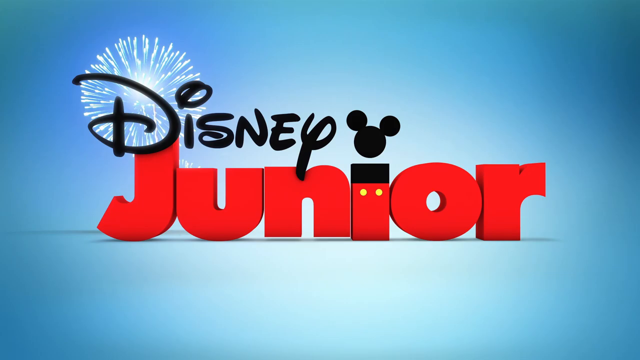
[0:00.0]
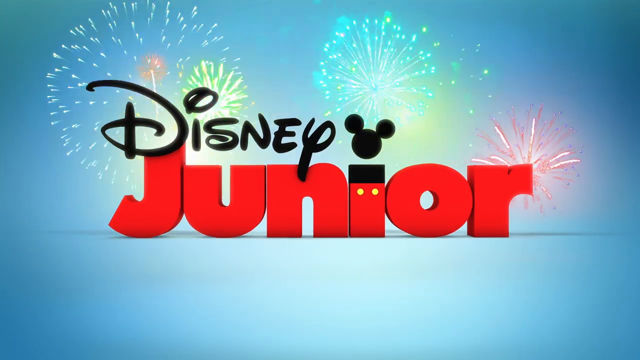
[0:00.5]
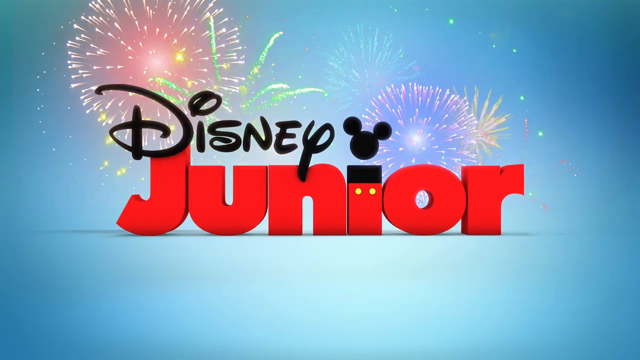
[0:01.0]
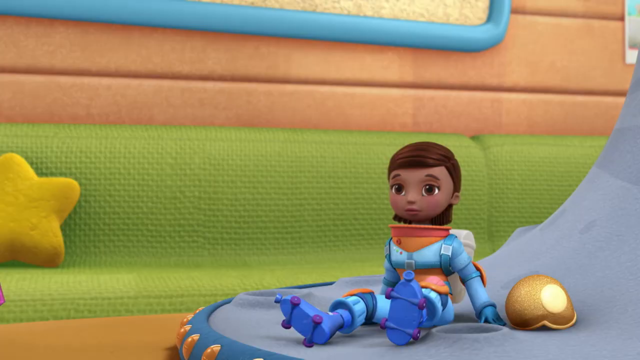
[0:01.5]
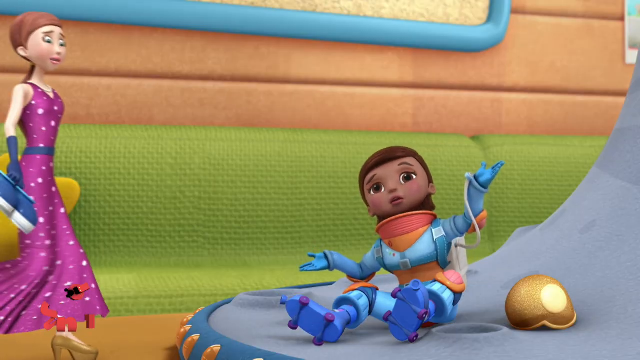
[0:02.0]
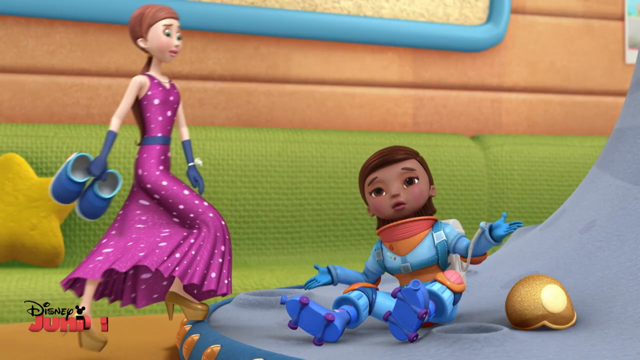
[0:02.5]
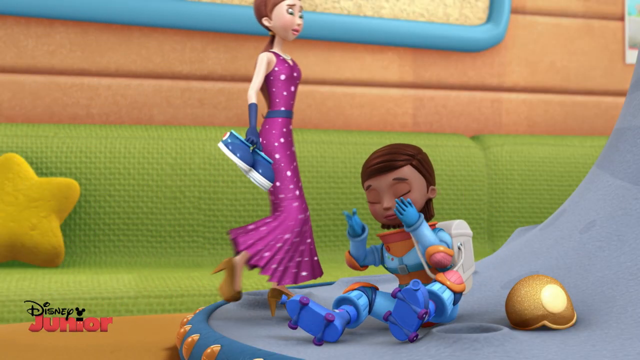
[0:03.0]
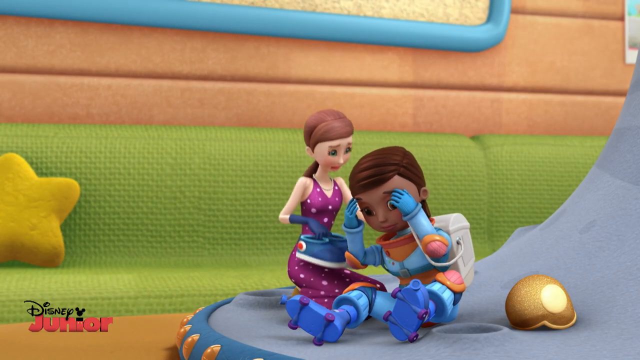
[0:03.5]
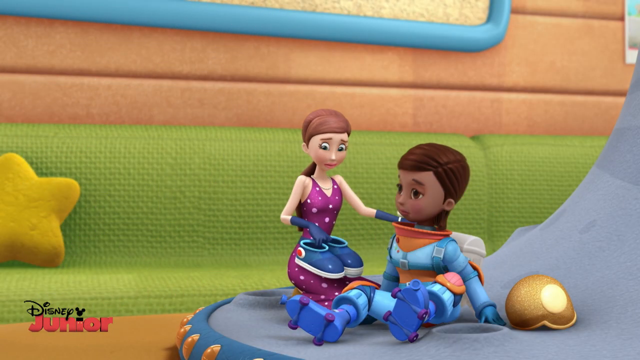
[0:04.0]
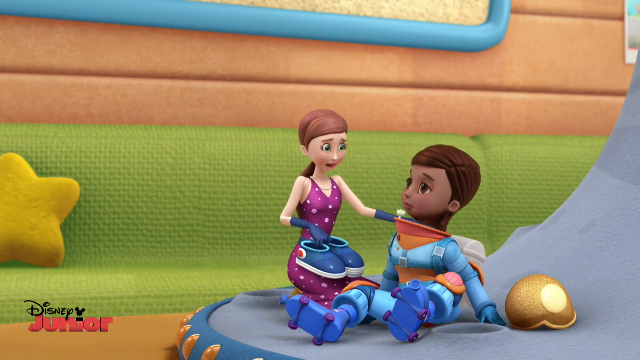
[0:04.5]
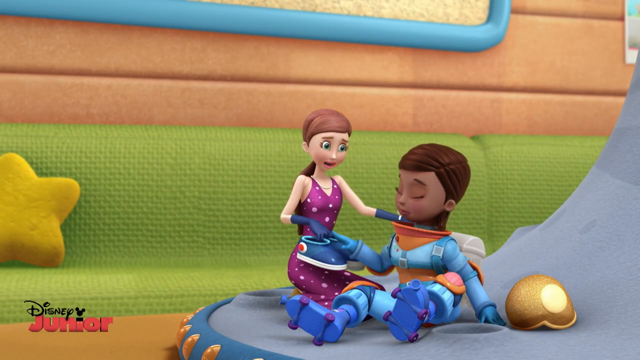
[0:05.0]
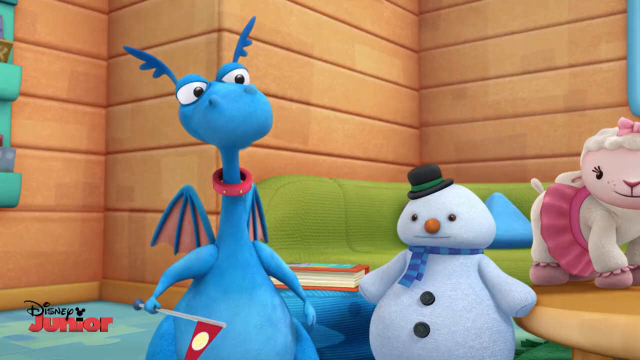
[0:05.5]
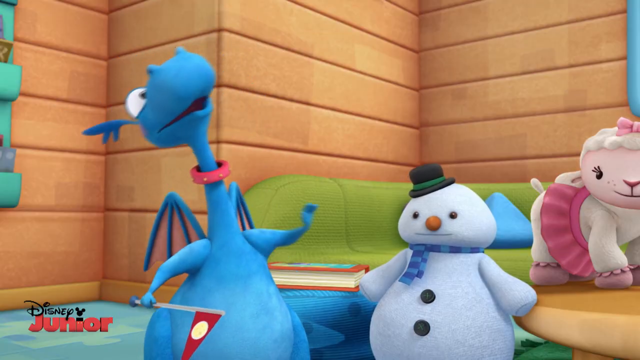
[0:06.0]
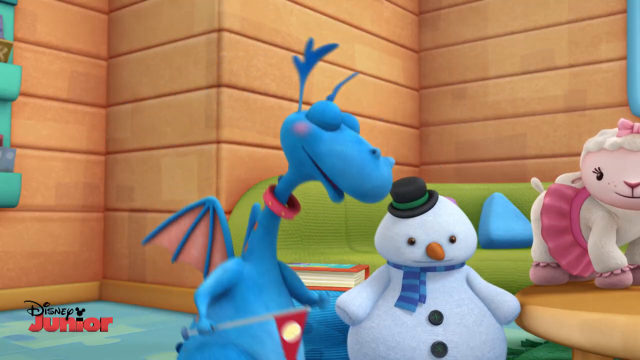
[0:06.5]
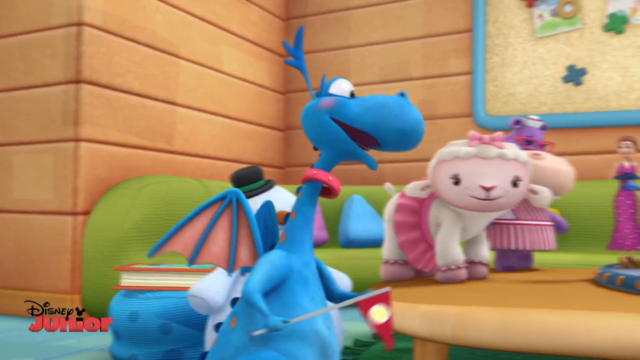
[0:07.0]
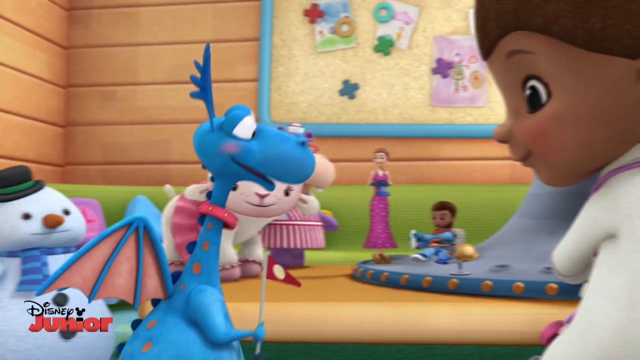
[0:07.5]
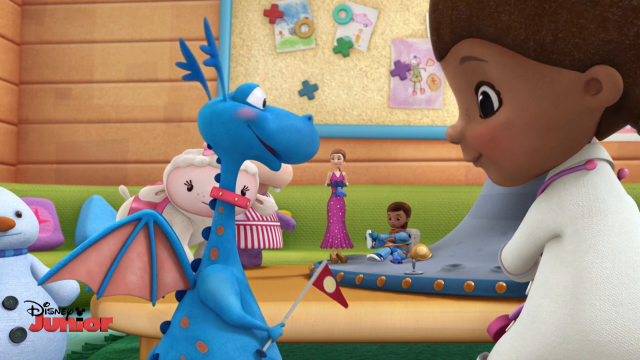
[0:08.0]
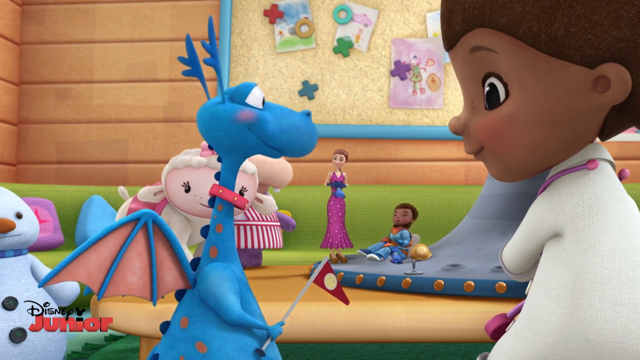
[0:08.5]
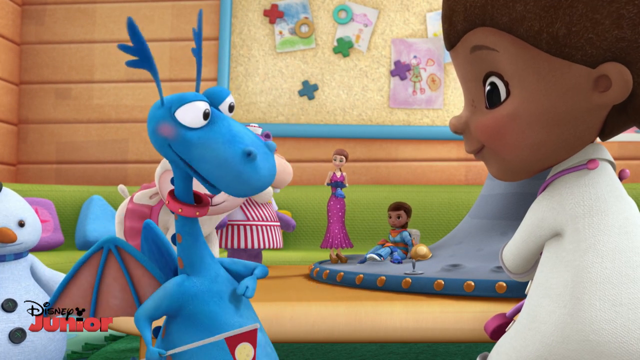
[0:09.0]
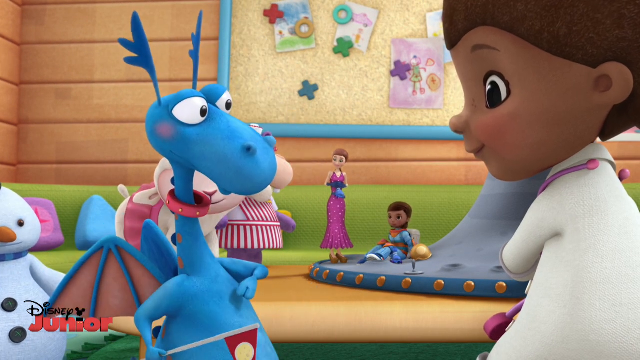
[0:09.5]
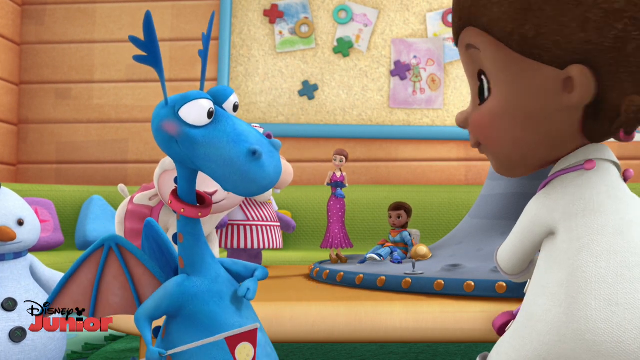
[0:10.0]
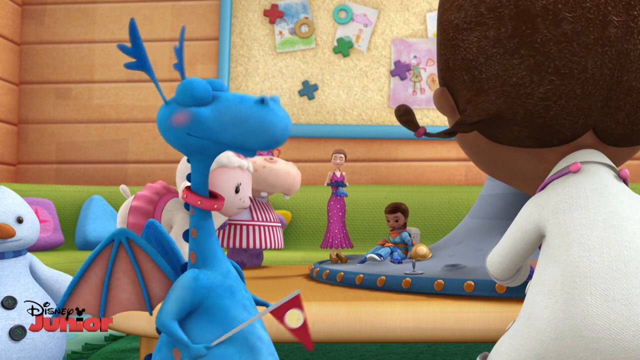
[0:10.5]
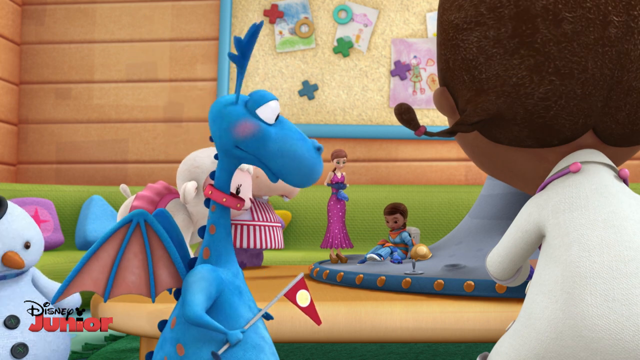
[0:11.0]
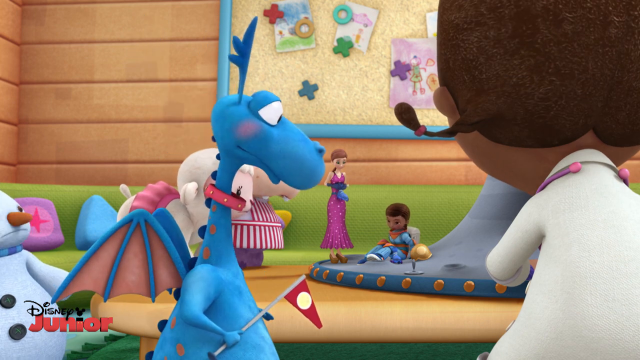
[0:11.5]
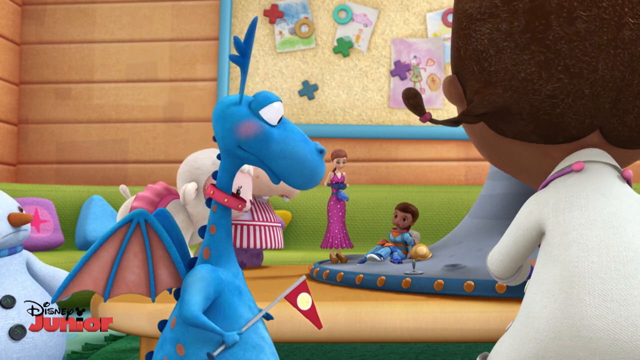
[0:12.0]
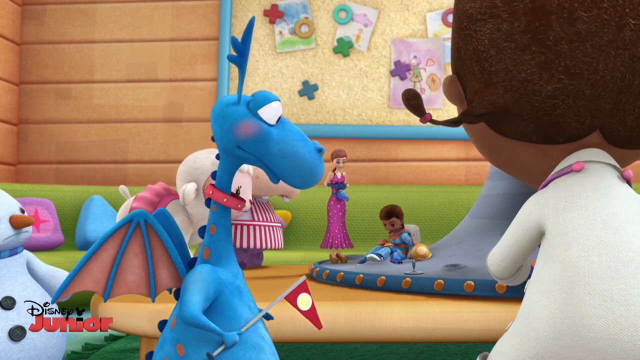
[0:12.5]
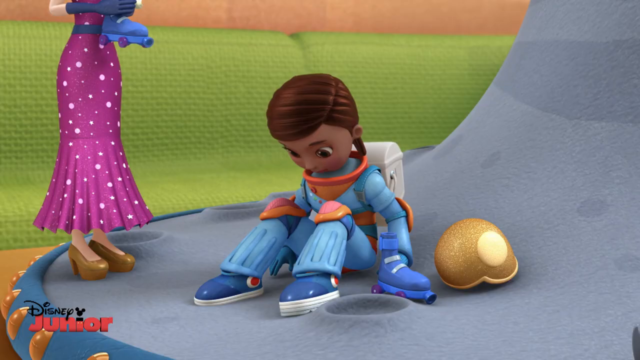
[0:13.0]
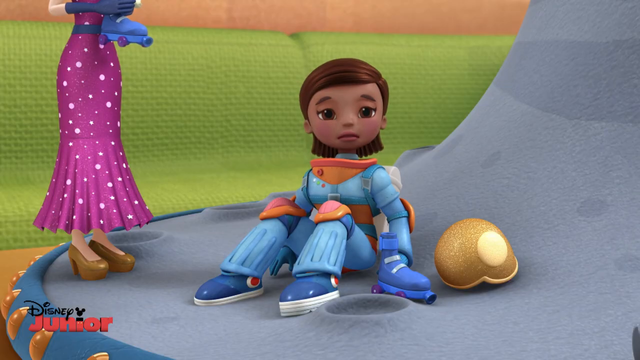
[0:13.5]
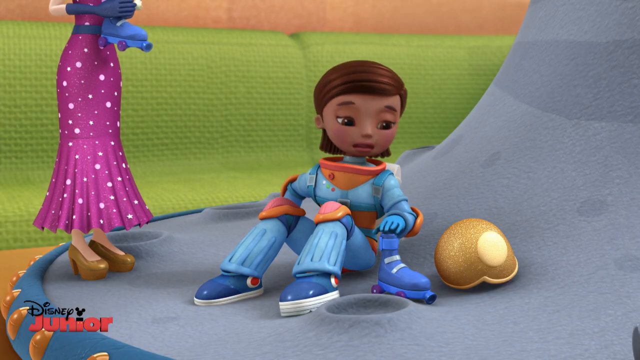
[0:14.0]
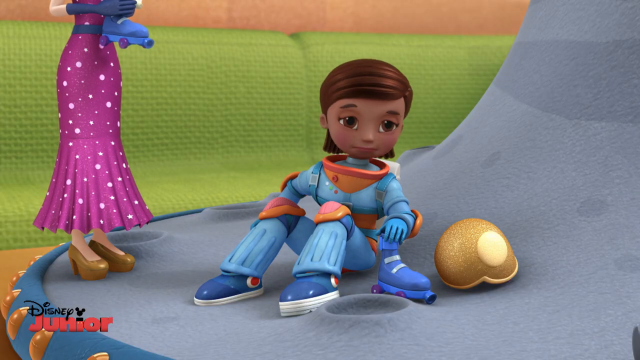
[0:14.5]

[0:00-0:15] The video opens with an intro showing "Disney jr.", with "jr." in big red letters and "Disney" in the usual black Disney font and logo, with the Mickey Mouse logo over the "i". The video then moves to what looks to be 3D animation. A girl in a space suit is sitting on the ground, looking distraught, with her helmet off. She is holding shoes, or being given them, as a woman in a purple polka-dotted dress leans down and offers her blue shoes. The video cuts to another little girl talking to a blue dragon with little wings; she then looks over to the other girl, who is sitting down looking sad.